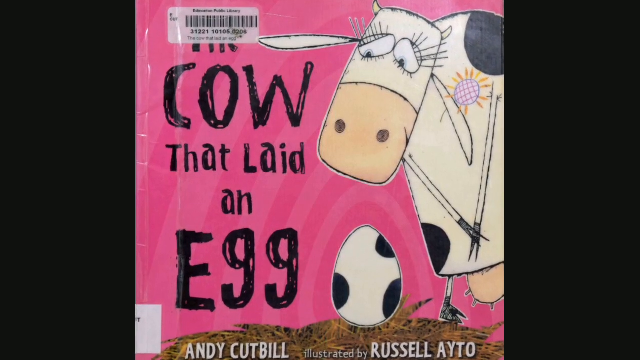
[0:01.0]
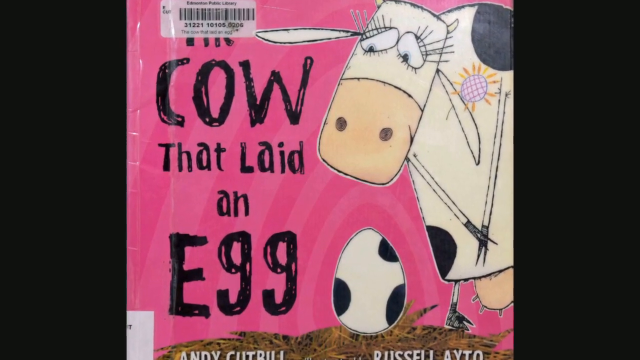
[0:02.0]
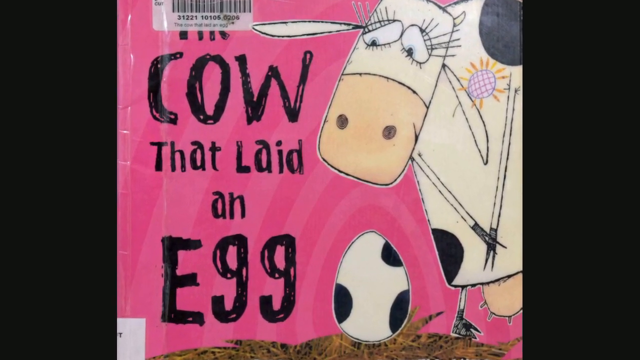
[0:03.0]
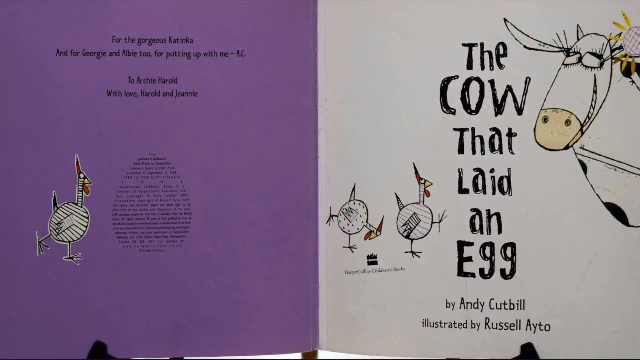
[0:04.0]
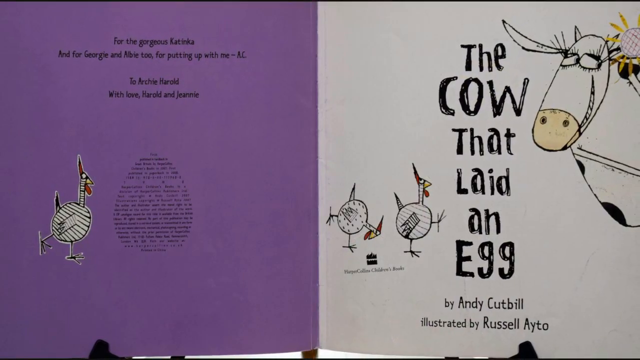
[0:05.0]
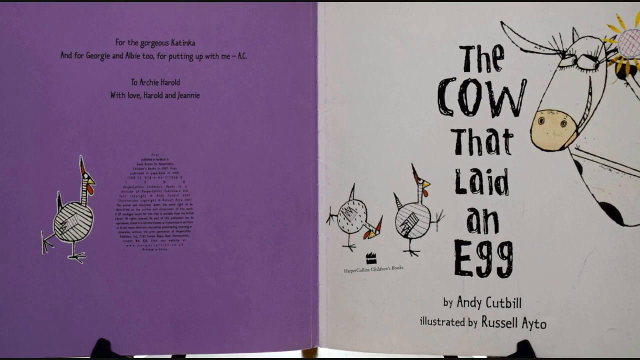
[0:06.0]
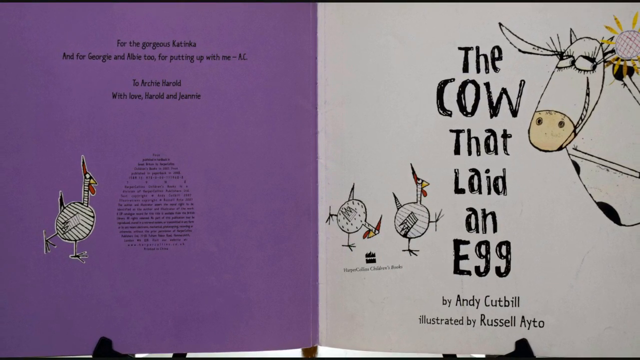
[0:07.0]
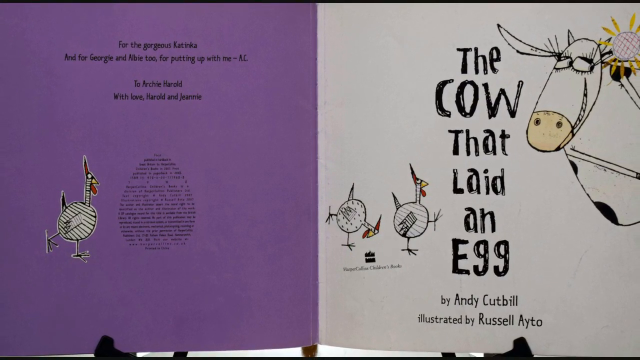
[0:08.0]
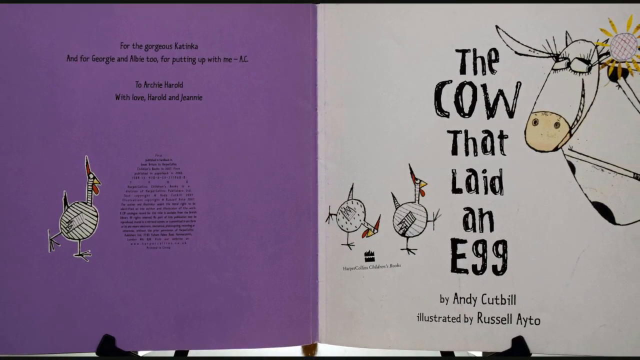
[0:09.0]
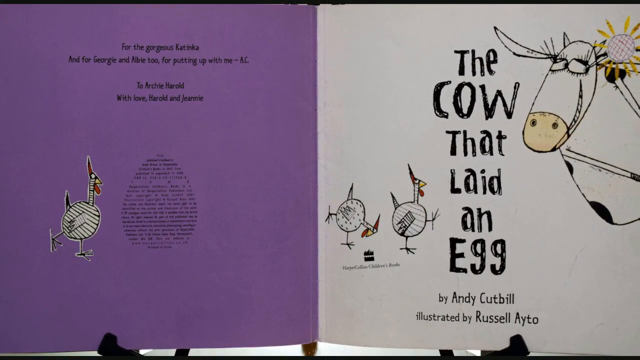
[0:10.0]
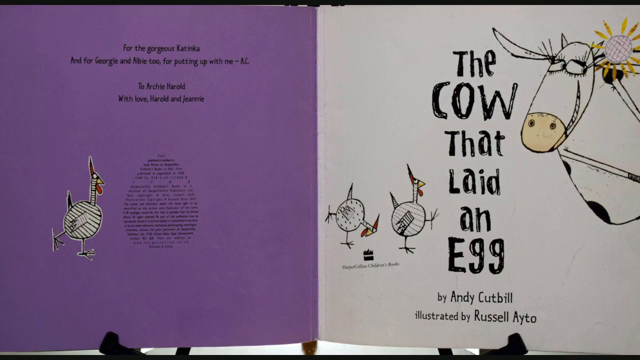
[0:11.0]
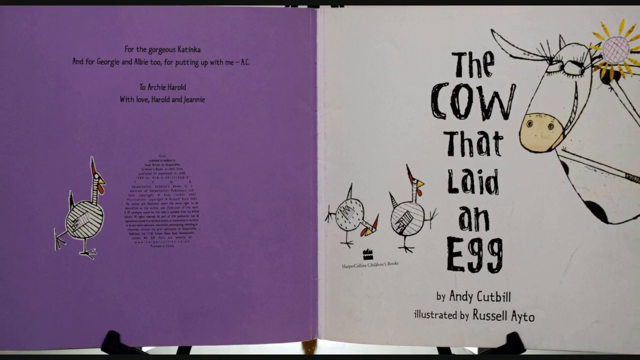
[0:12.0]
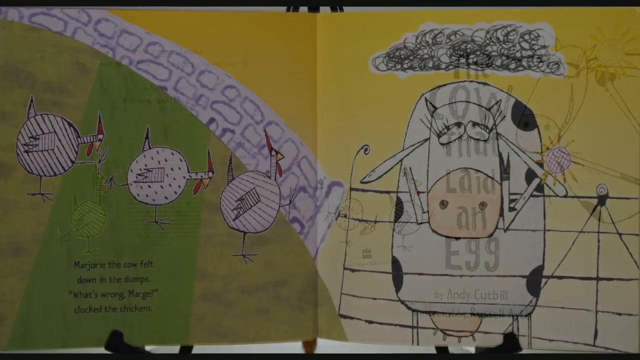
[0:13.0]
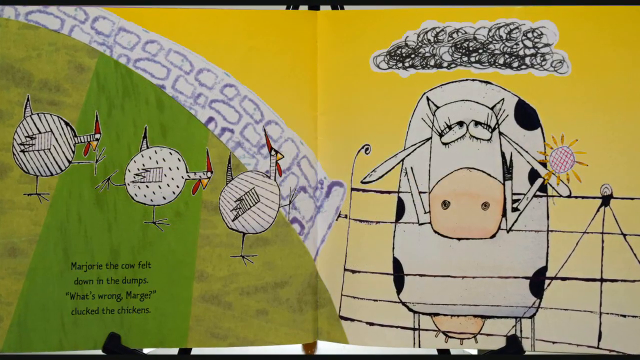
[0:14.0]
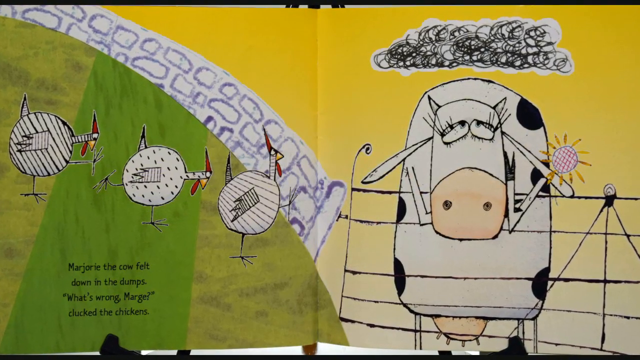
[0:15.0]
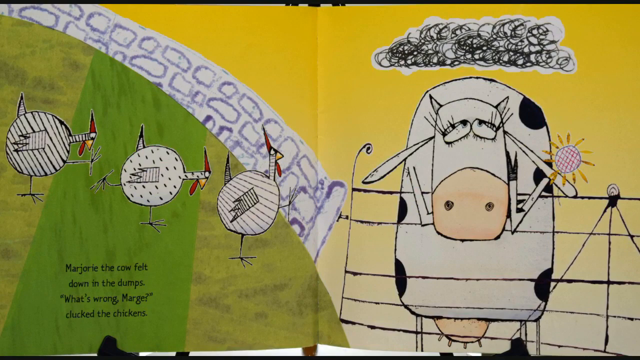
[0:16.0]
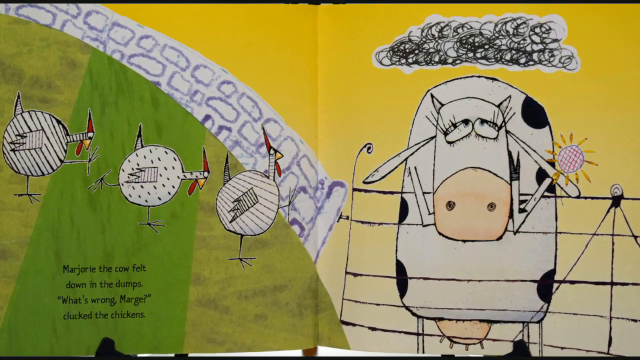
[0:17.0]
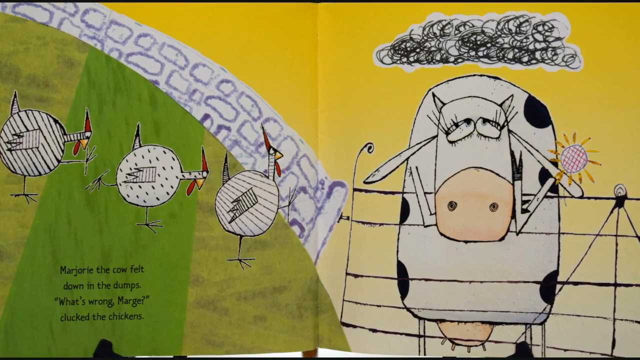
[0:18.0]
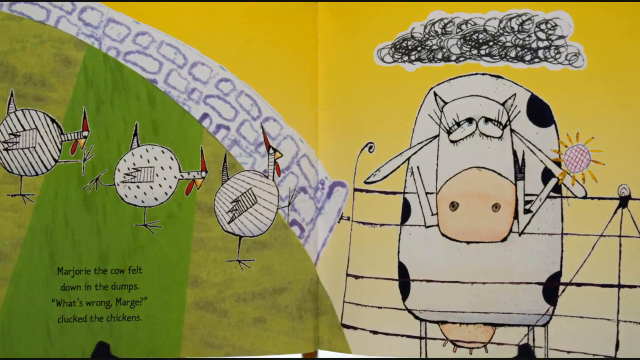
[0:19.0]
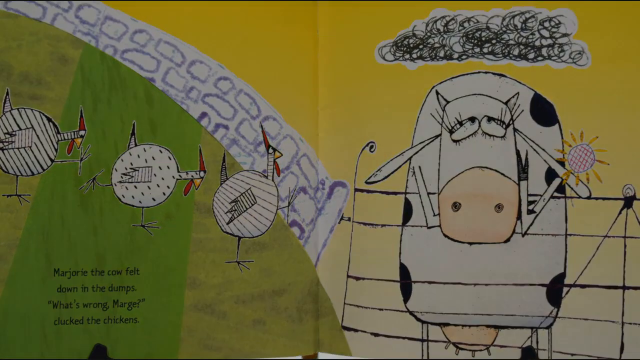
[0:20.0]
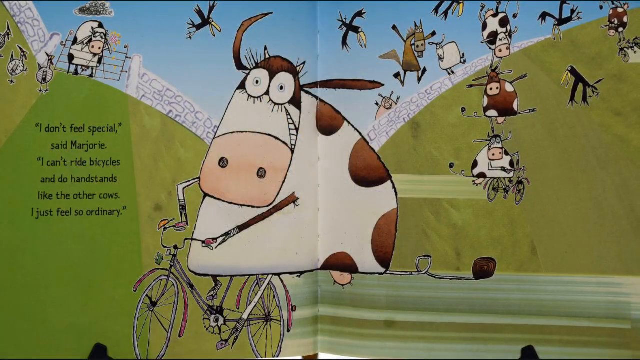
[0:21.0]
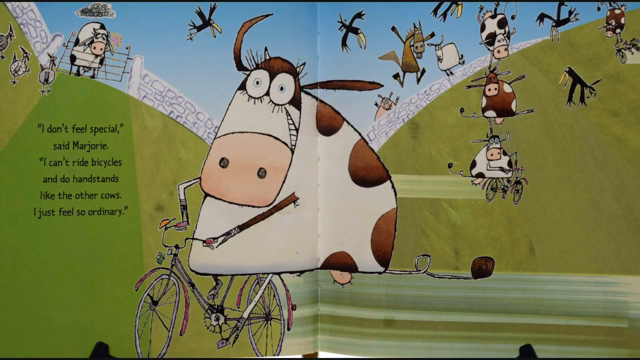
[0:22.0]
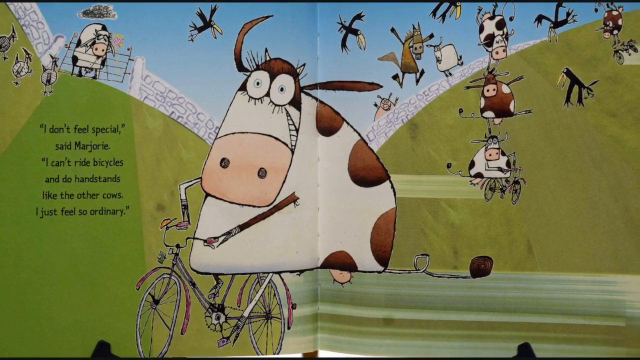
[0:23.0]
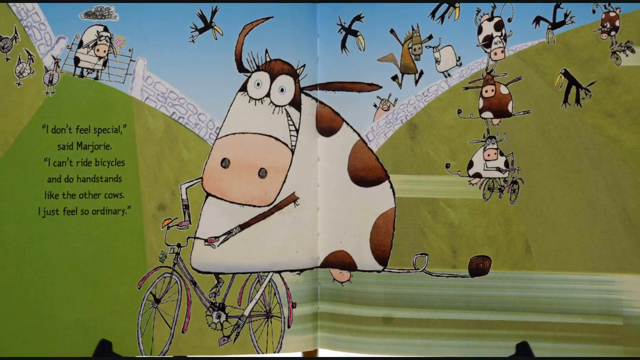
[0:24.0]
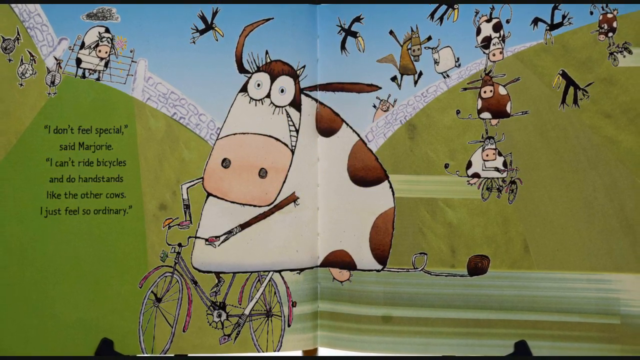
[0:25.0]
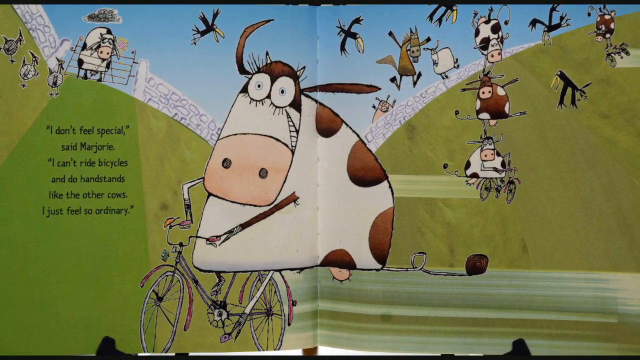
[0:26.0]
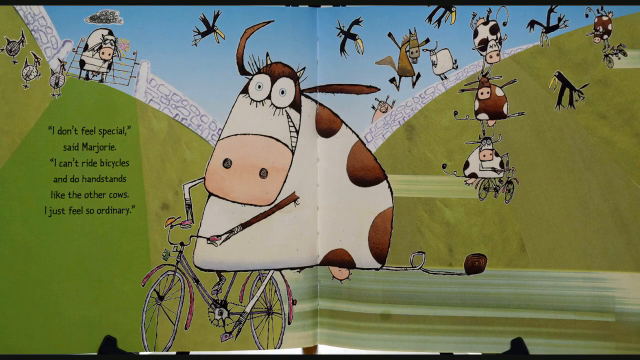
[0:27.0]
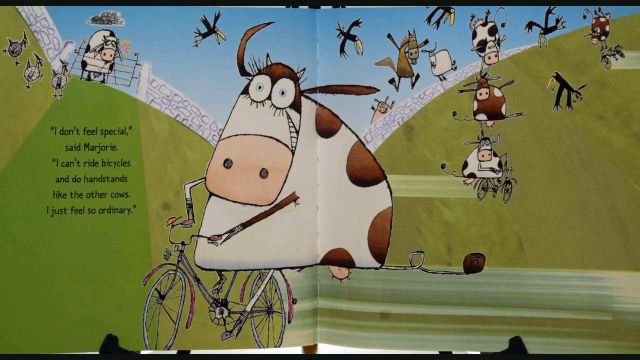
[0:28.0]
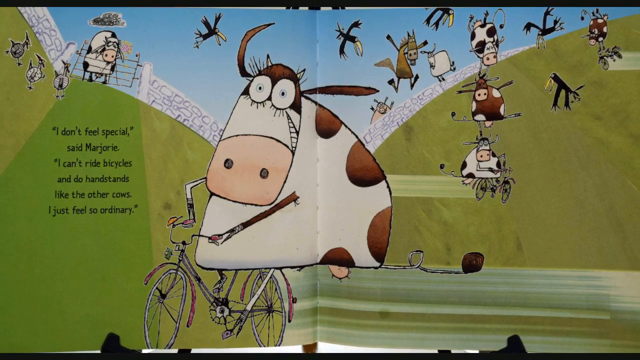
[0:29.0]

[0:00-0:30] The video shows a reading of the book "The Cow that laid an egg." The copyright page appears, and then the title, "The cow that laid an egg." The first page says Marjorie is down in the dumps, and the text reads "What's wrong Marge" said the chickens. Marjorie is shown looking very sad, with a gray, gloomy cloud over her head, and the text reads "I don't feel special" said Marjorie, "I can't ride bicycles and do handstands like the other cows. I just feel so ordinary." Some of the other cows are shown doing handstands and other things that aren't ordinary. The copyright page shows that the book is printed in China, and some of the words on it are set in the shape of an egg. One dedication reads "for the gorgeous Katakinka and for Georgie and Albie too for putting up with me," and the other reads "to Archie Harold with love Harold and Jeannie."